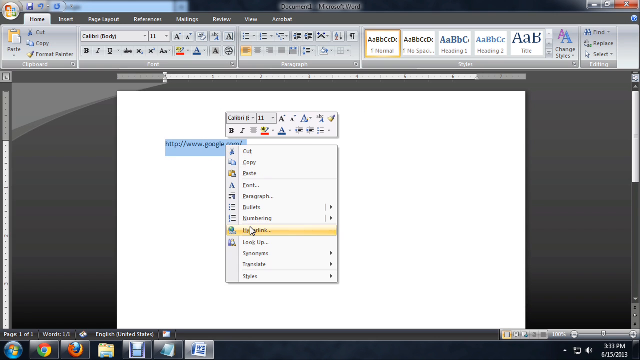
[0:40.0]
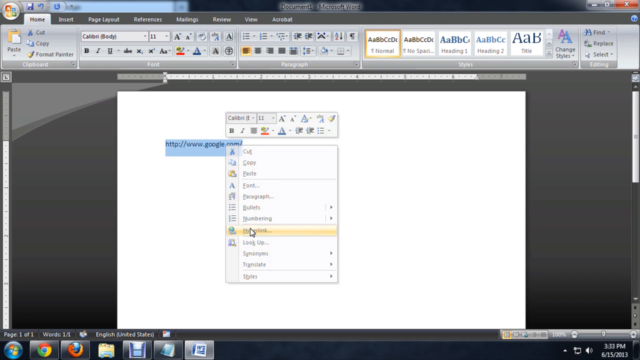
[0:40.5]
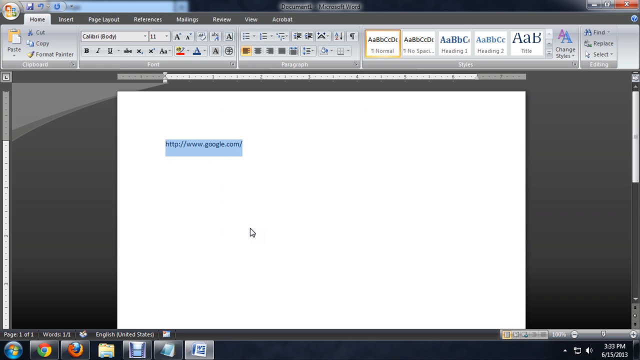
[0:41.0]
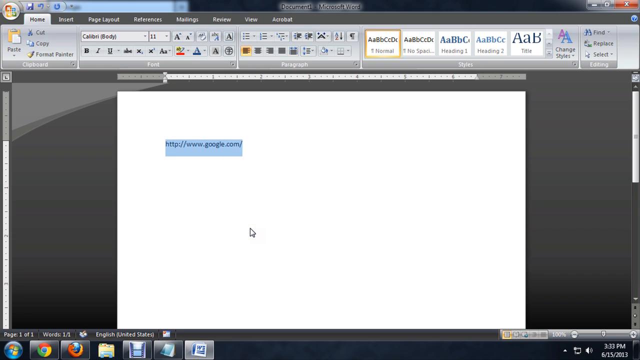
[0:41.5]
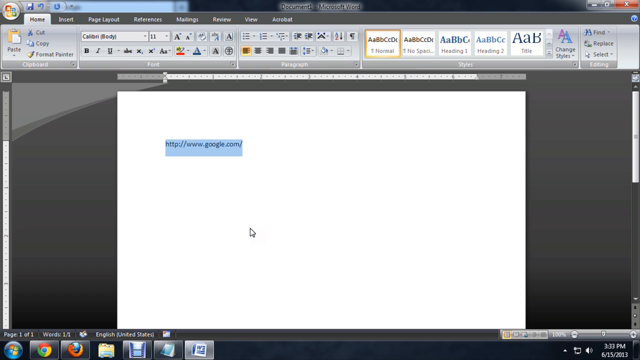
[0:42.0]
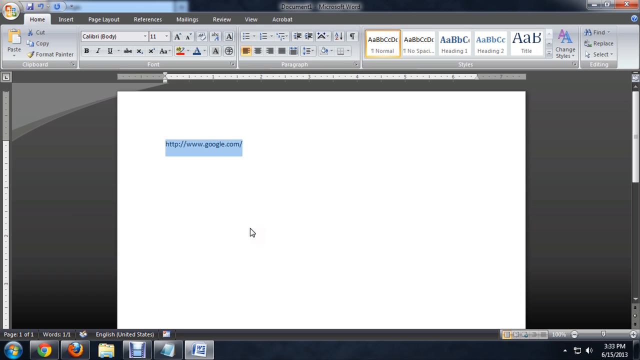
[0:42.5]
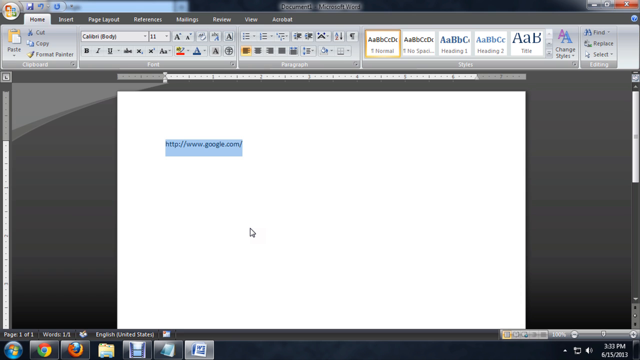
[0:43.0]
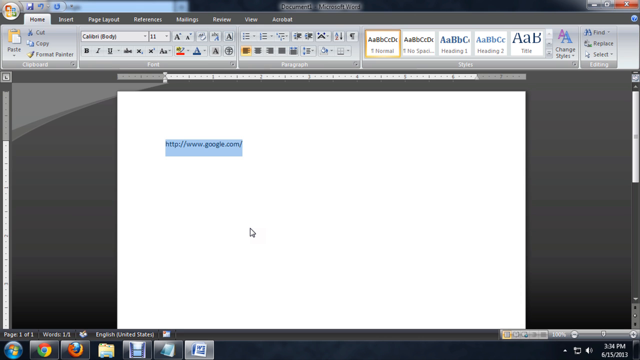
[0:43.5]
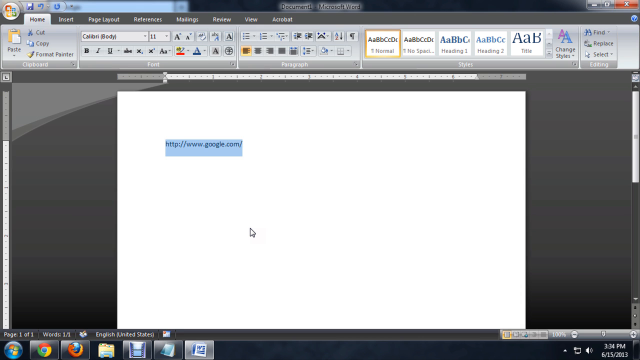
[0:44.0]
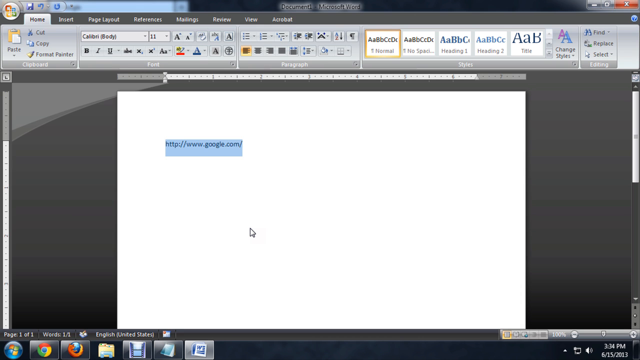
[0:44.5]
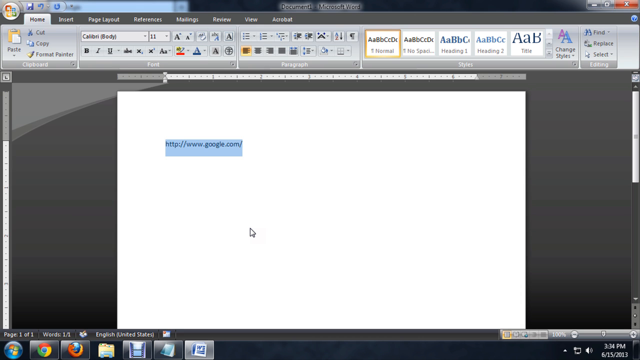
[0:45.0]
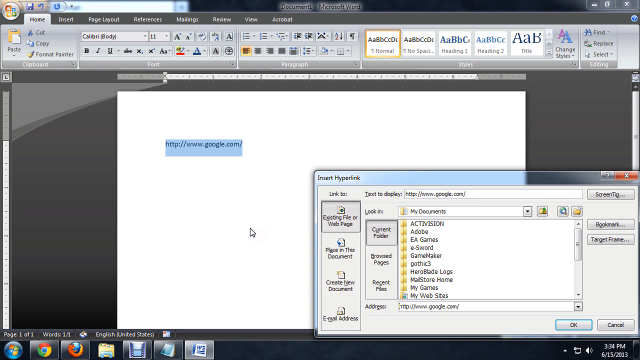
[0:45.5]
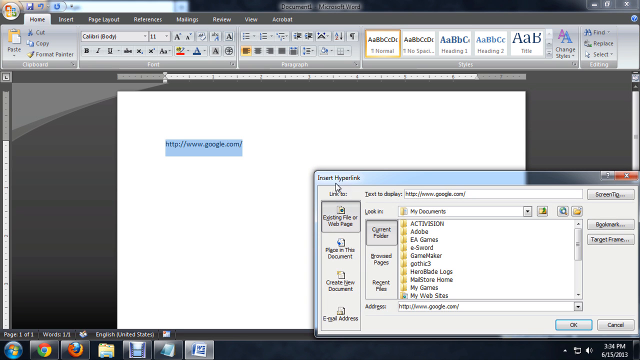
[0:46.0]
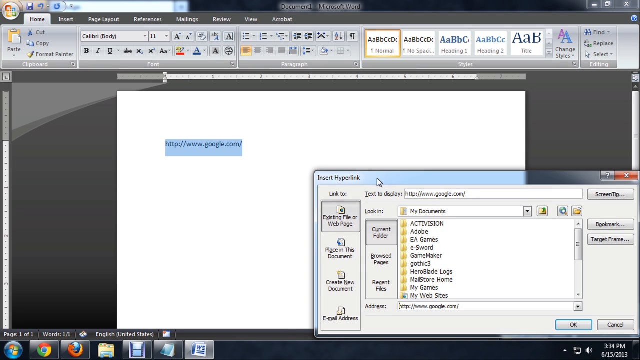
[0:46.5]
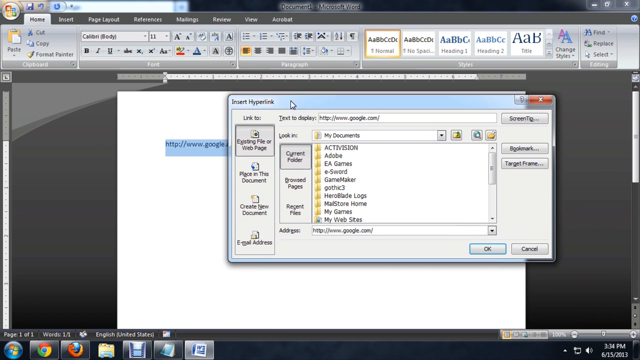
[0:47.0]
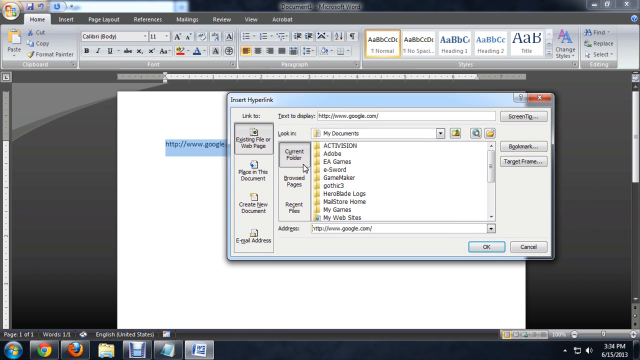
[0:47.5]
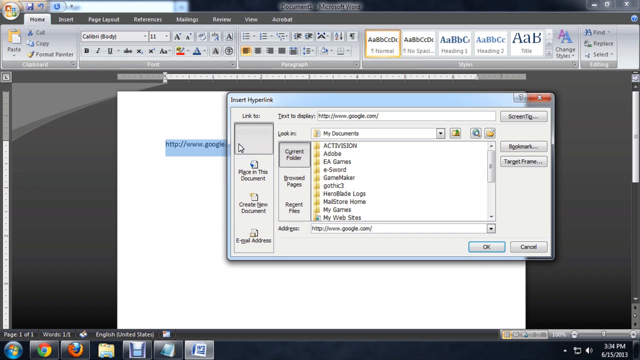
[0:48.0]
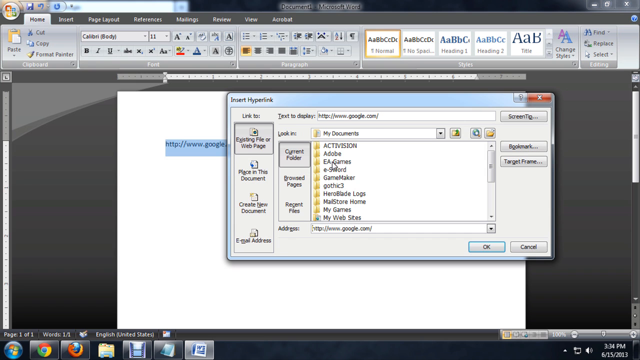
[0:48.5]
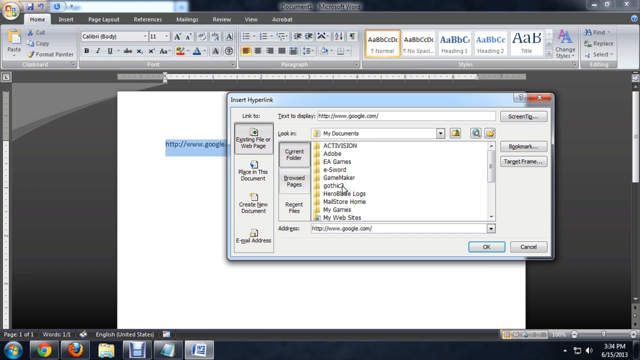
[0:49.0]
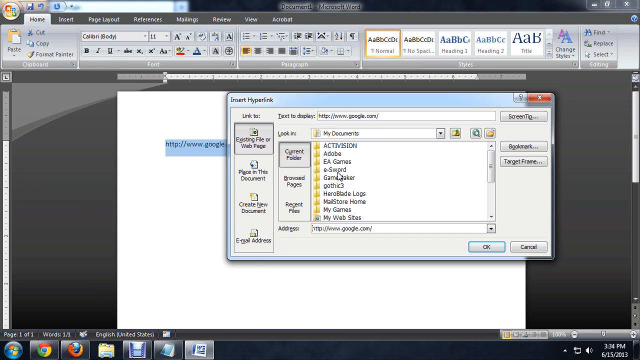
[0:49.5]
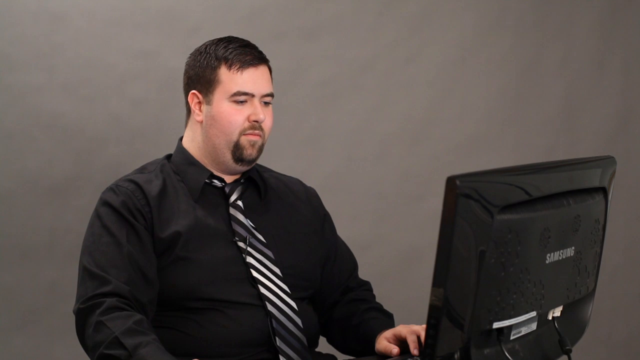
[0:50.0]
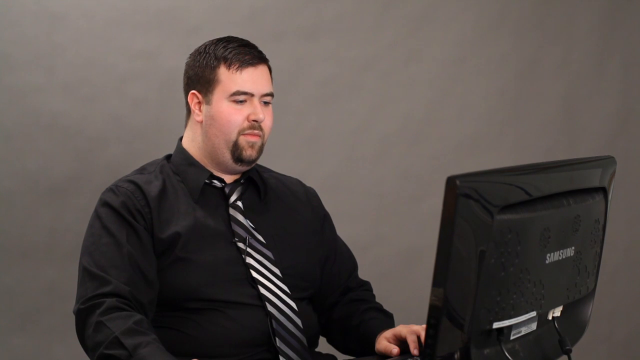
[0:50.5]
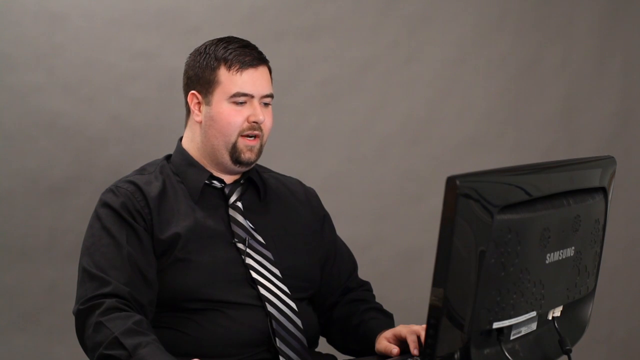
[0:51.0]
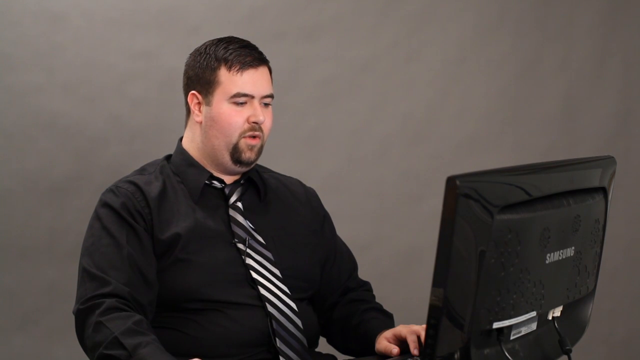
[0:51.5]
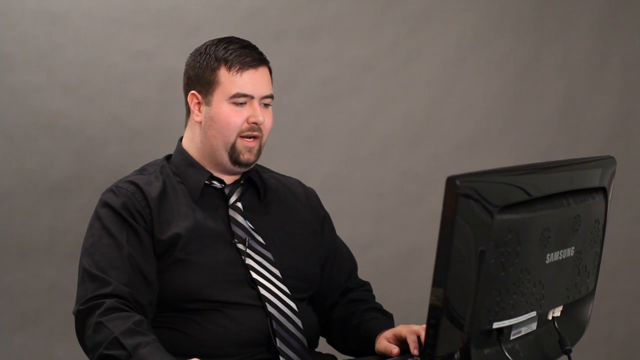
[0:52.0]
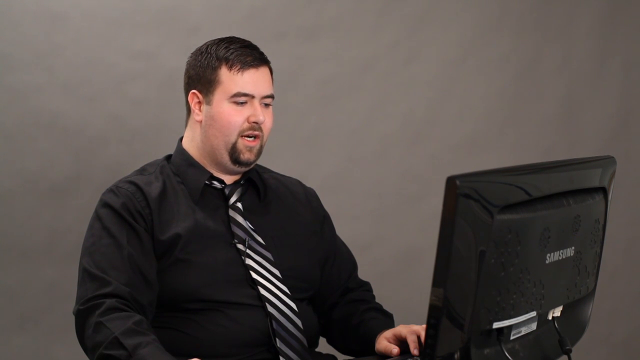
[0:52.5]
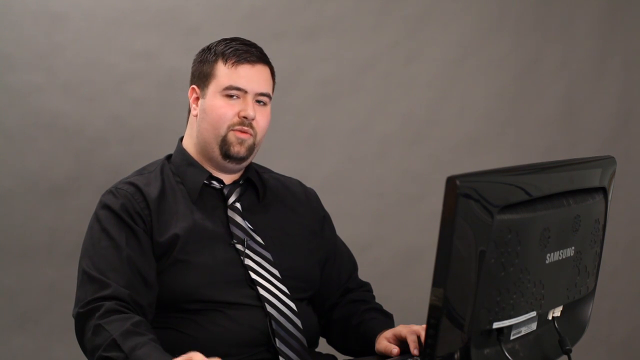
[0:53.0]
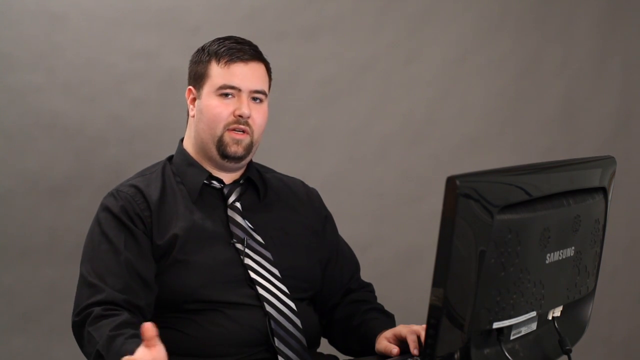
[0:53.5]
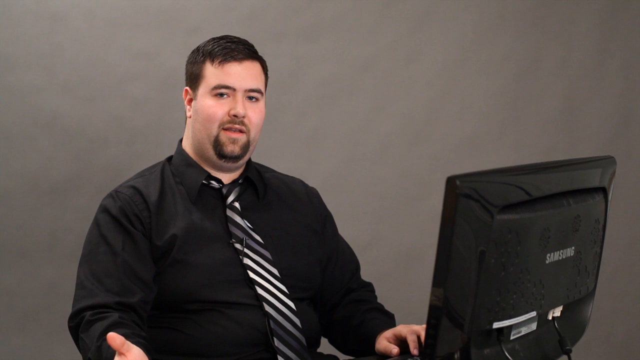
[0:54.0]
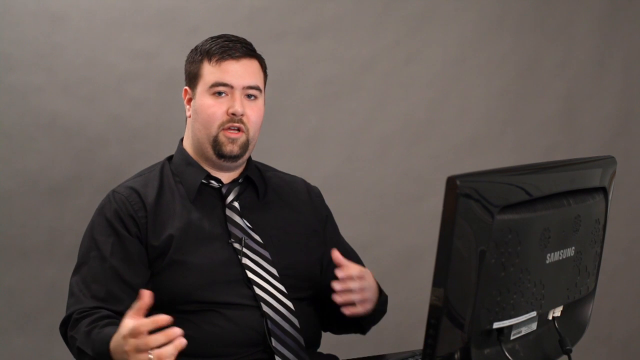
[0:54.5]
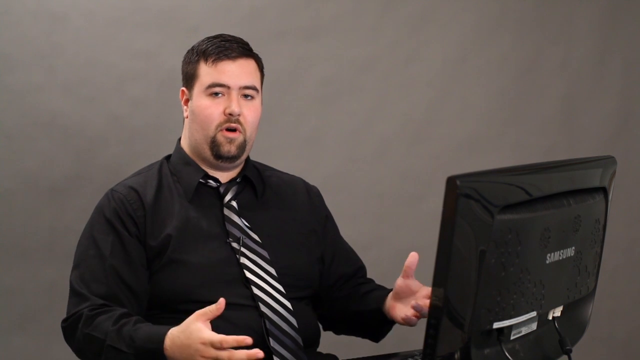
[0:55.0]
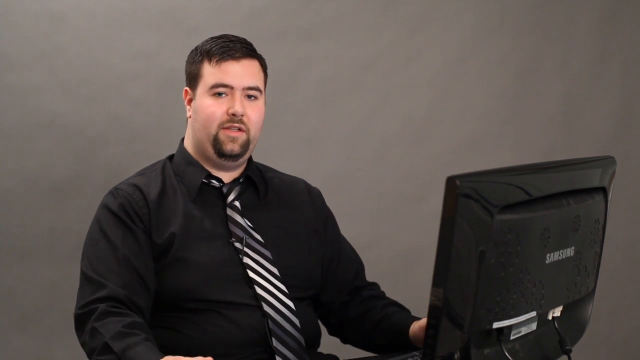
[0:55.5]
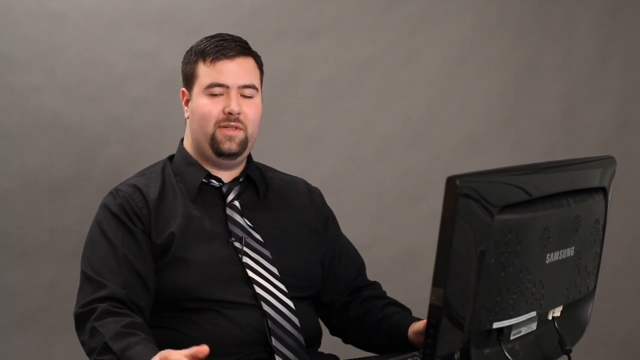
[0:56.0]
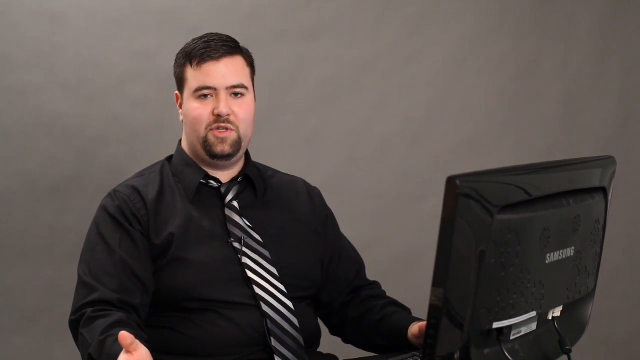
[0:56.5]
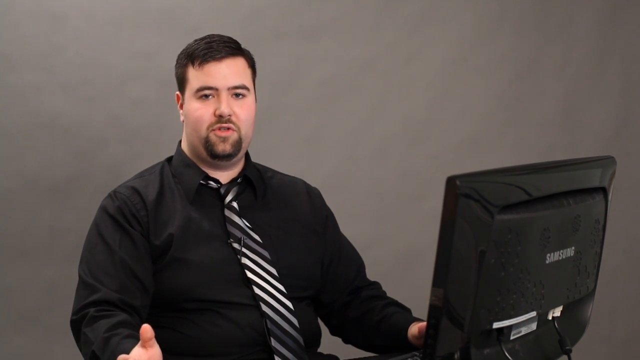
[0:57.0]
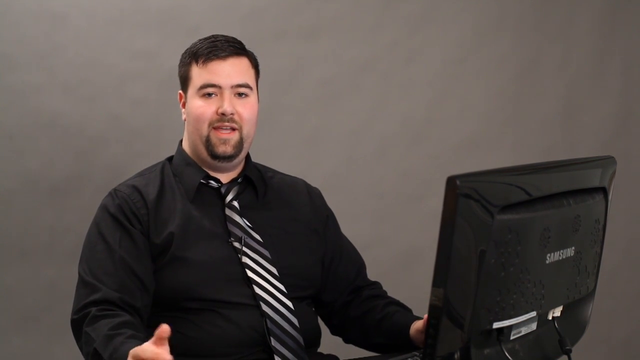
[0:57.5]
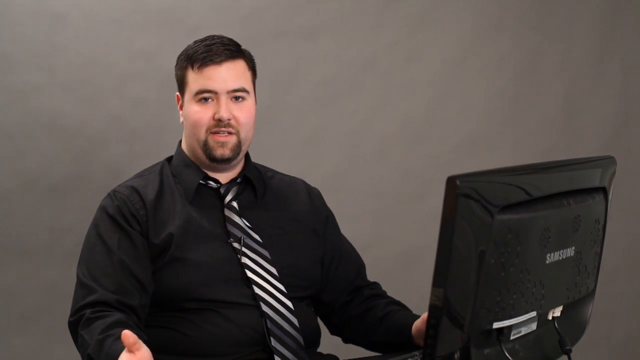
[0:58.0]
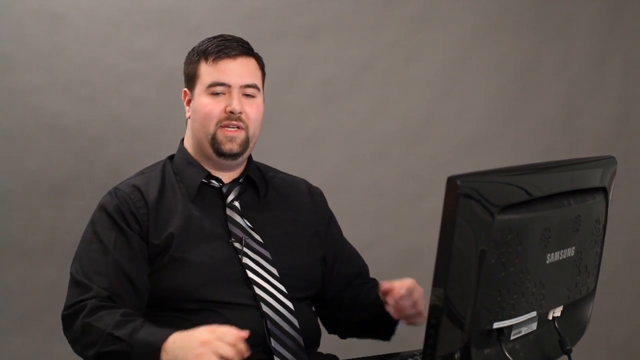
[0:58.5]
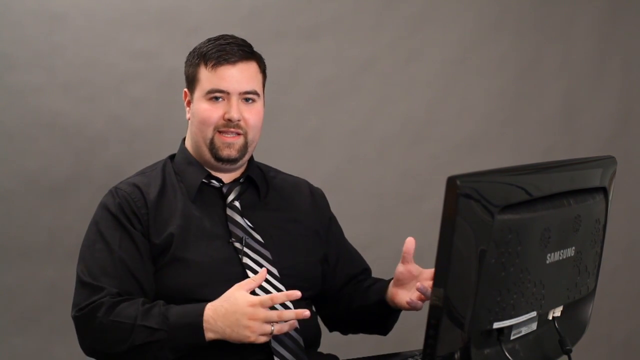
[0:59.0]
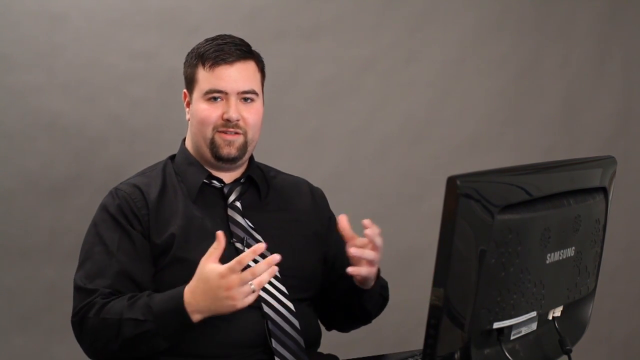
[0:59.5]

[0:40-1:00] With the Google link highlighted in the Word document, he goes down to the hyperlink option and clicks it. The mouse stays still for a few seconds before the Insert Hyperlink tab pops up, showing options for where to set the link and what text to display on the hyperlink. He moves the mouse toward all the options, and his documents are shown in the middle of the open tab. The video then cuts to Josiah talking toward his computer screen. He moves his lips and speaks toward the screen, then turns to the camera, moving both hands from left to right as he talks with a little emotion on his face. He continues making hand motions.